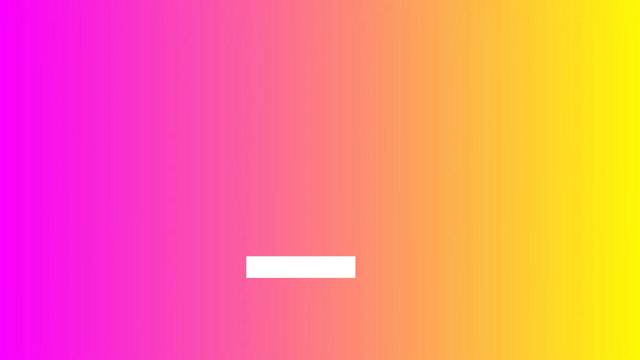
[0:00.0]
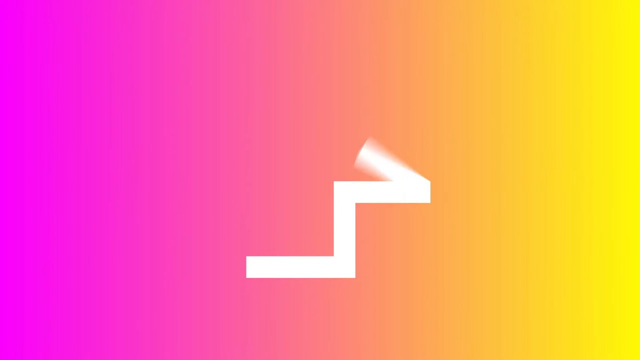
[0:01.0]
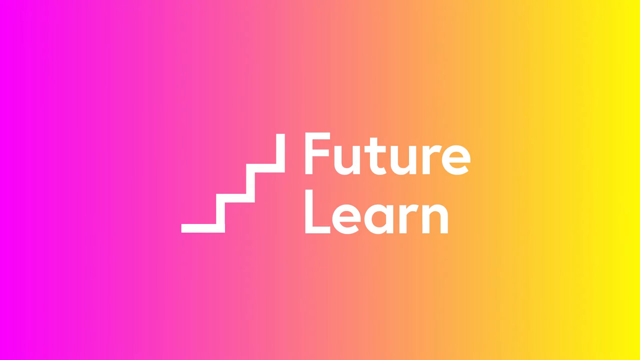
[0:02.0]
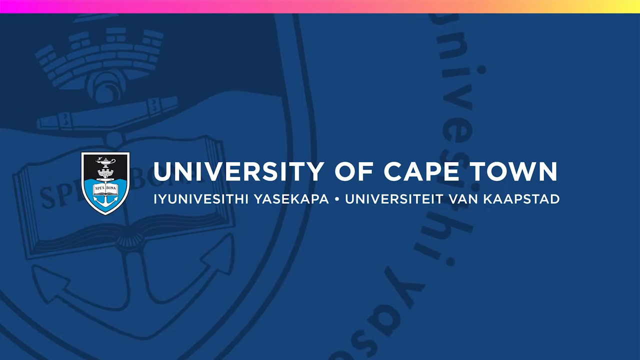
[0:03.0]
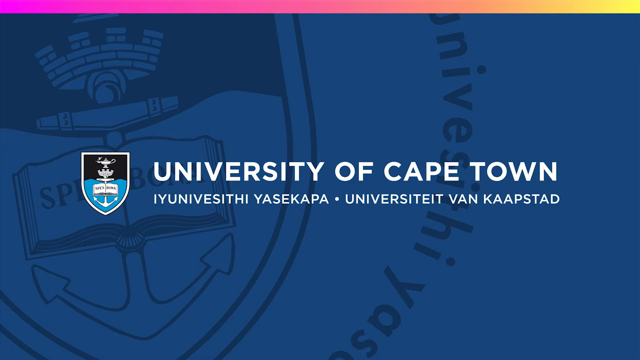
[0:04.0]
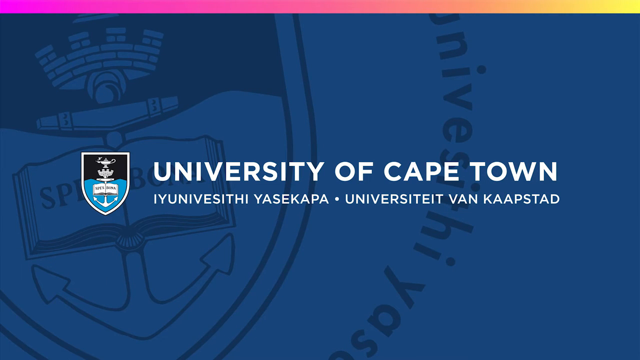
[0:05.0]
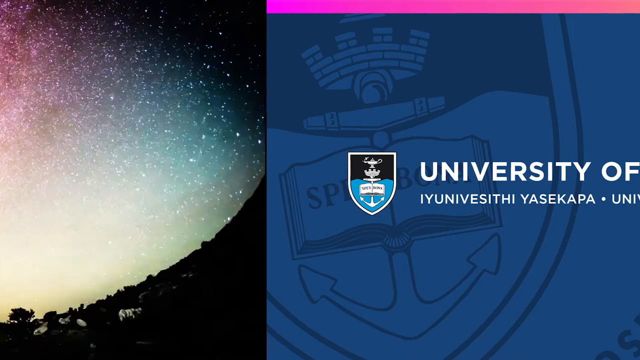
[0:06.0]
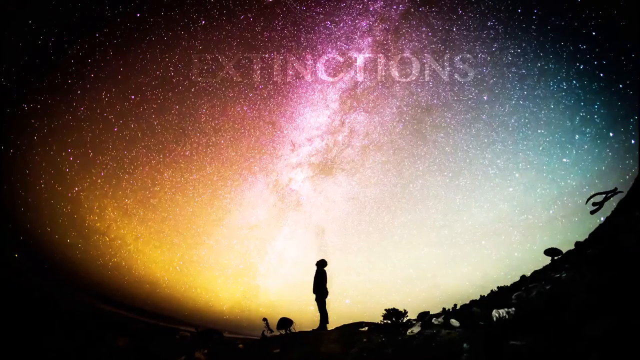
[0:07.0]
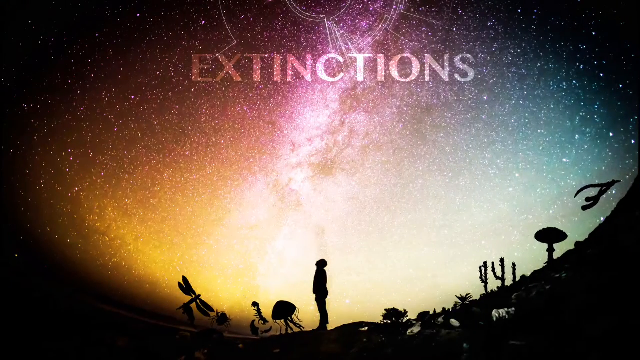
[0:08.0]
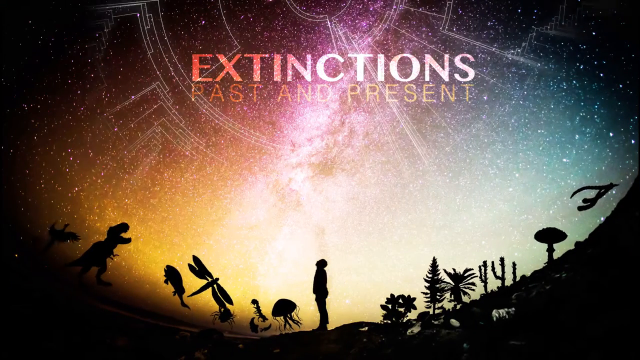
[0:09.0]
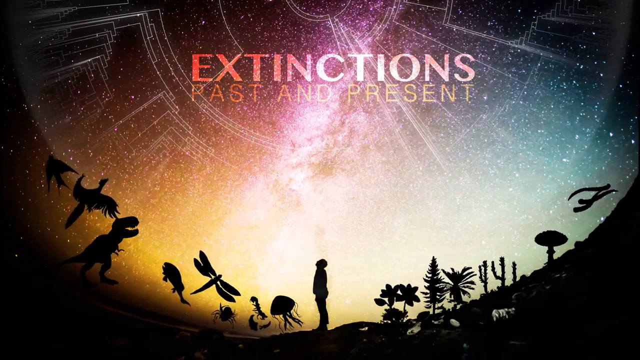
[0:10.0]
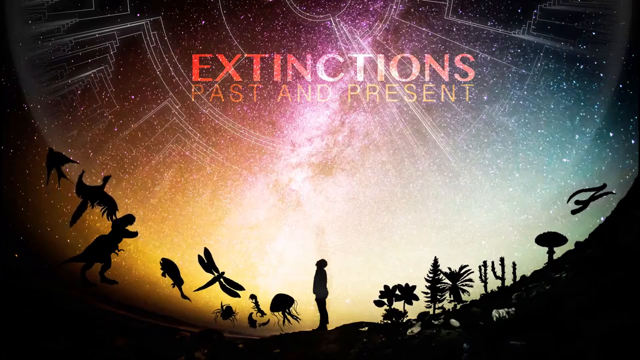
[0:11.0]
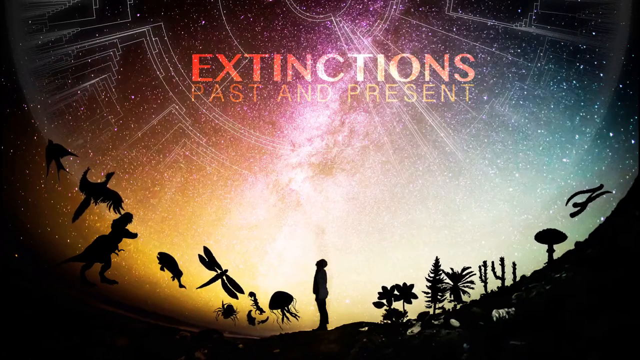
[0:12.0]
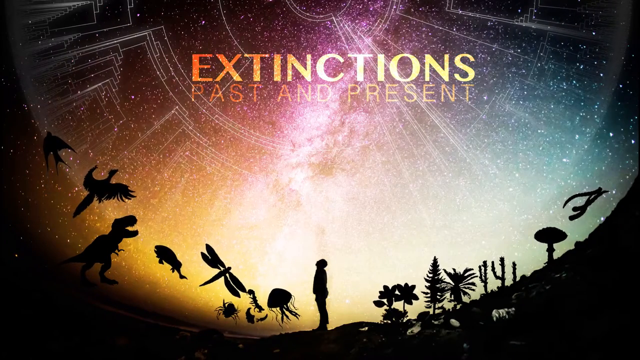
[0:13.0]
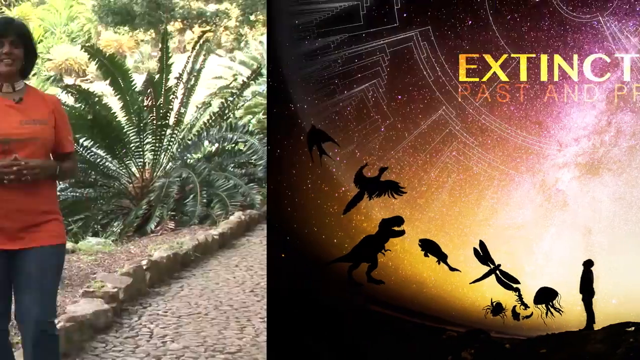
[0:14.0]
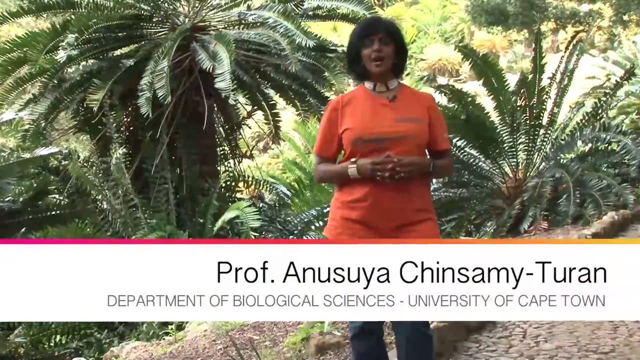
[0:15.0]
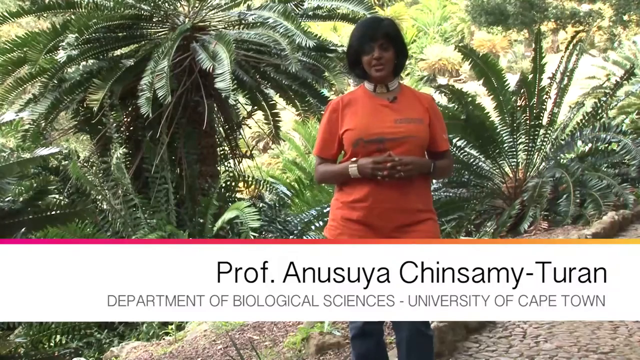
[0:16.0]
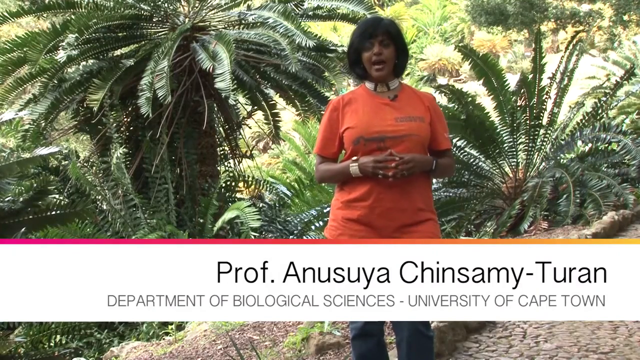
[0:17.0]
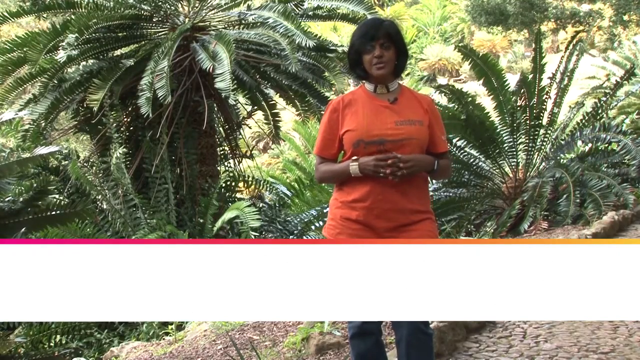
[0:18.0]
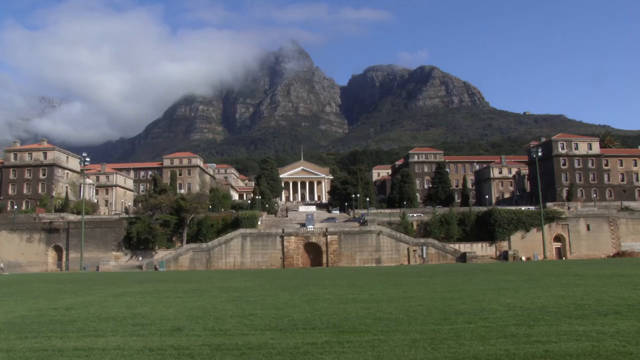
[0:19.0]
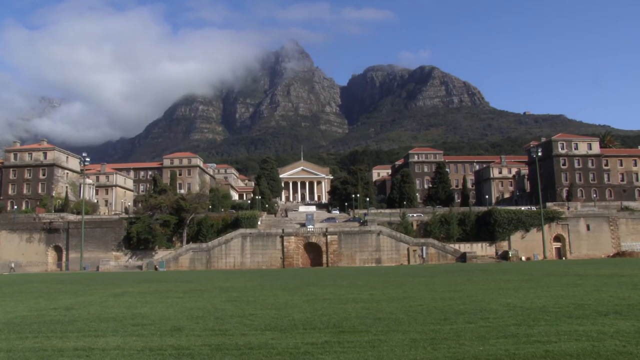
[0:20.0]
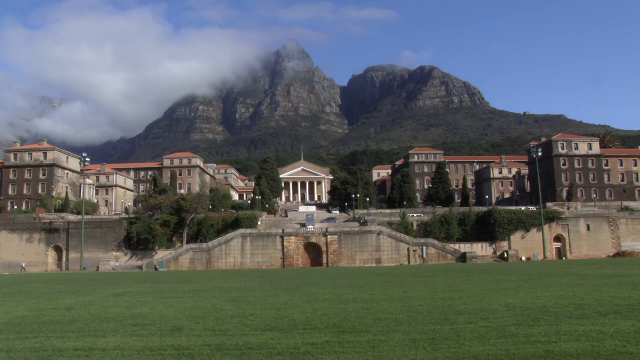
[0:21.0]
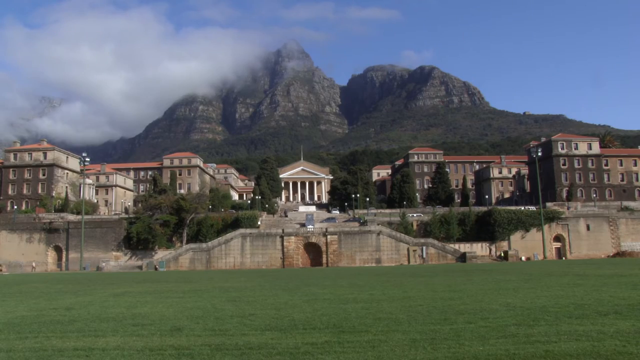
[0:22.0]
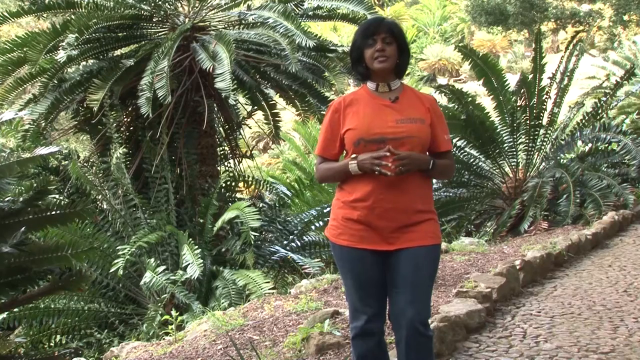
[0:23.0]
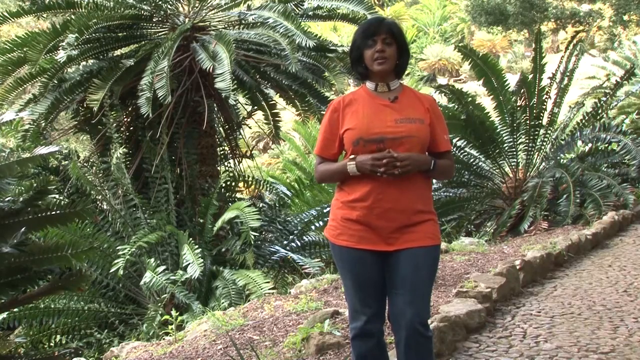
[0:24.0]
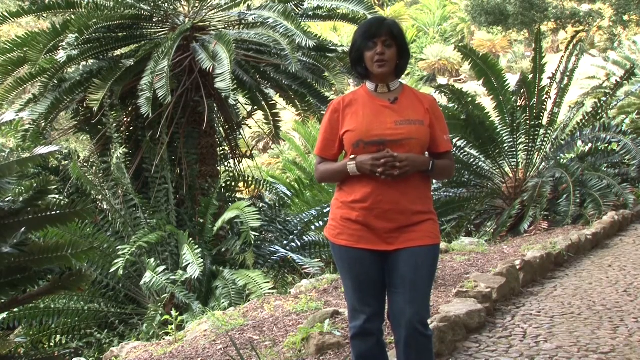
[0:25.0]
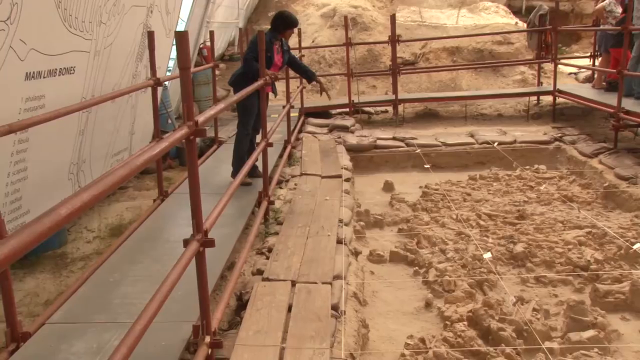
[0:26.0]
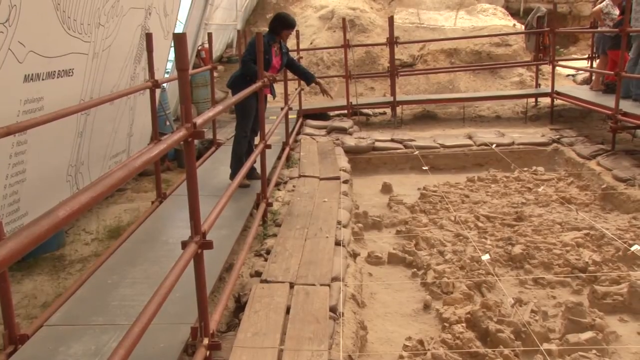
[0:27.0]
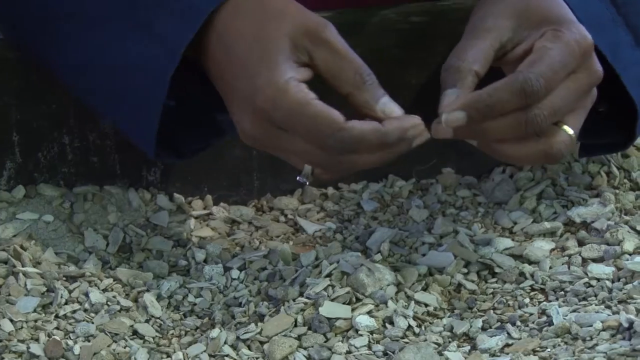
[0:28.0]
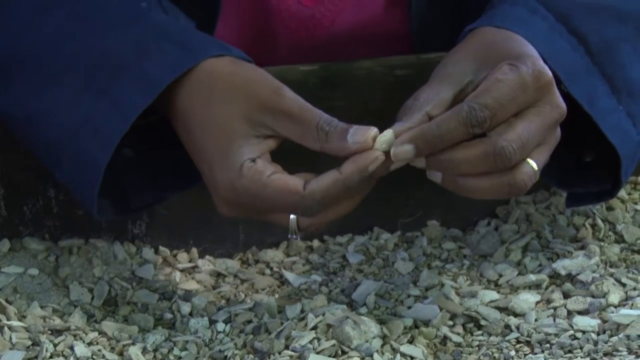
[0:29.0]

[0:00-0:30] Against a pink, yellow, orange and peach background, a staircase starts at the bottom and expands upward, encompassing a sort of logo that reads "Future Learn." Another logo then appears on a blue background, reading "the University of Cape Town," with a couple of other languages below that apparently repeat it. To the left is the university's shield-like logo, with kind of a lamp at the top and an anchor at the bottom. Next, an image shows a person at the bottom of a sort of circle or arc, looking upward into a sort of star-filled sky, where light-lettered text reads "Extinctions," with "Past and Present" below it. Popping up at the edge of the circle at the bottom are dinosaurs, giant sort of dragonflies, mushrooms, plants, sorts of man-of-war type fish and other fish, which move around, flow and ebb. An image of a woman is then brought up with her name below: Professor Anusuya Chinsamy Turan. Below that is her title, "Department of Biological Sciences, University of Cape Town."